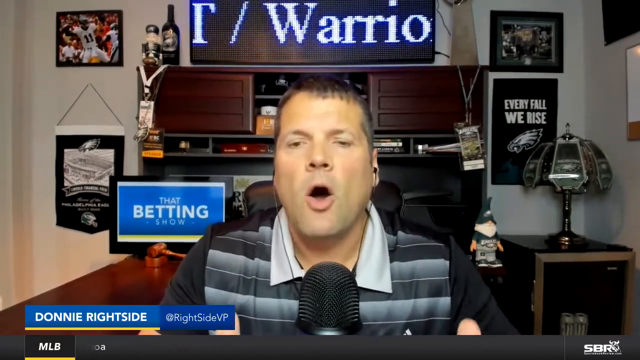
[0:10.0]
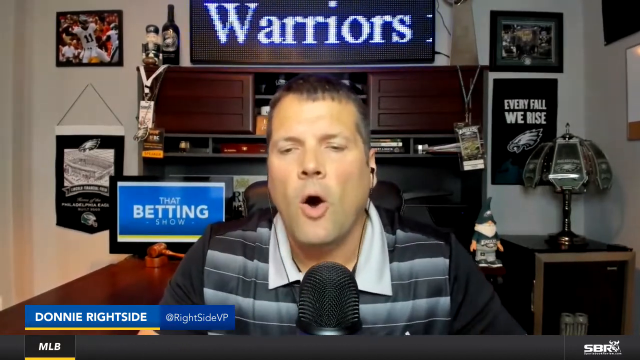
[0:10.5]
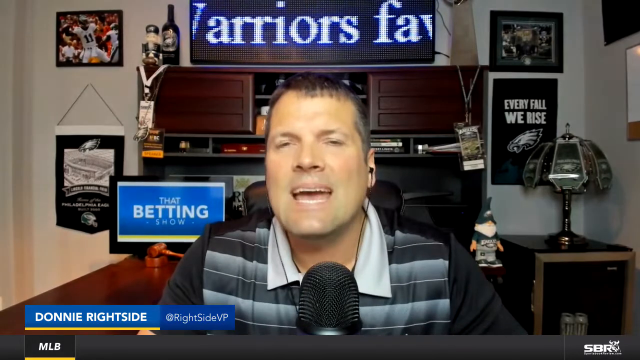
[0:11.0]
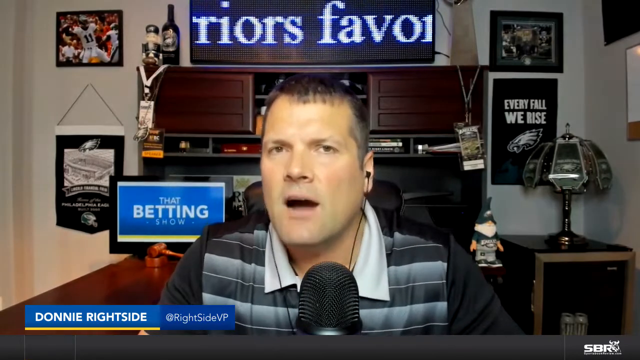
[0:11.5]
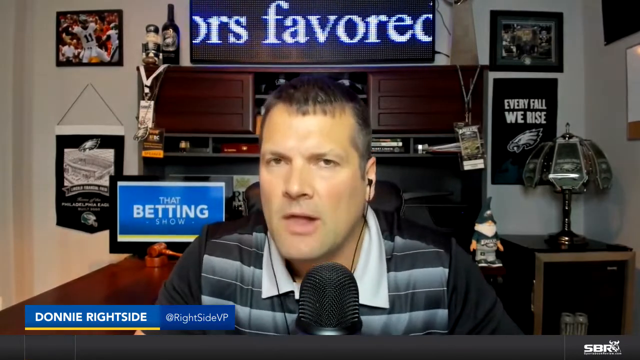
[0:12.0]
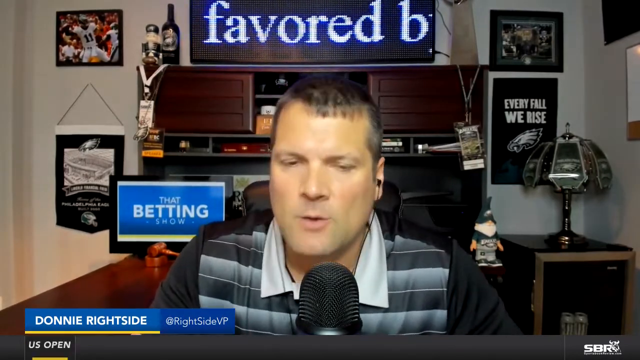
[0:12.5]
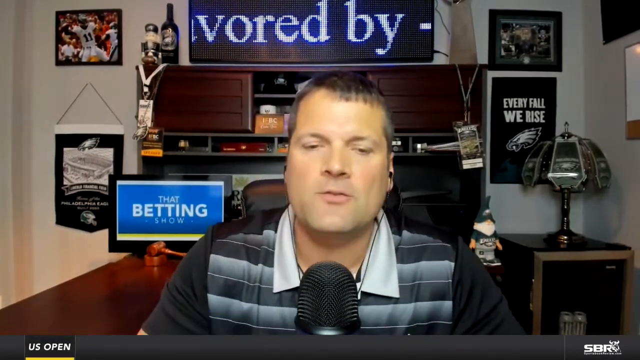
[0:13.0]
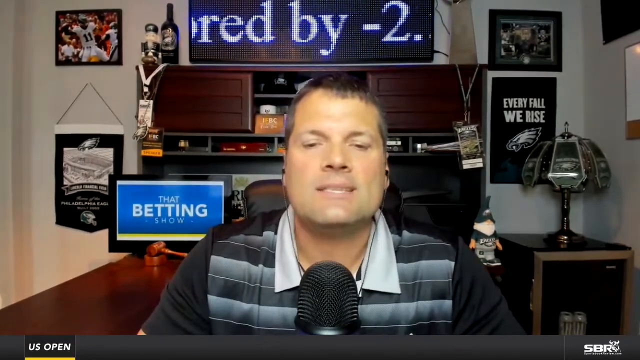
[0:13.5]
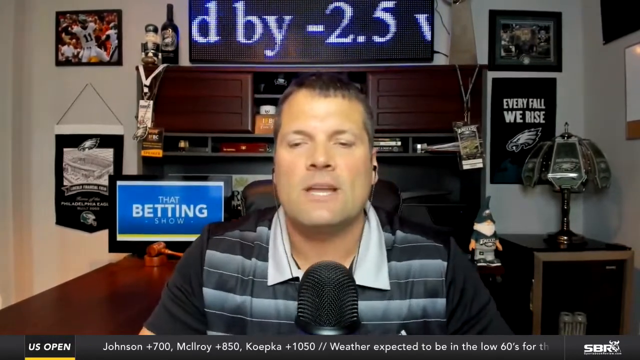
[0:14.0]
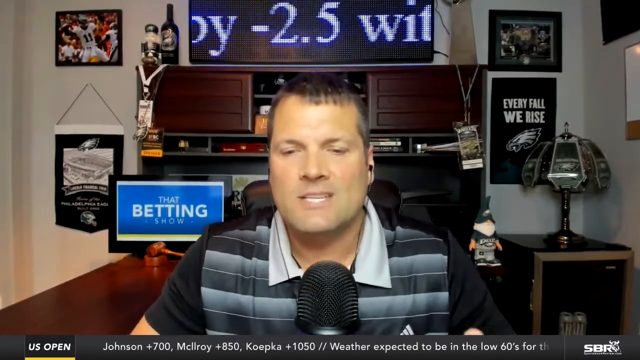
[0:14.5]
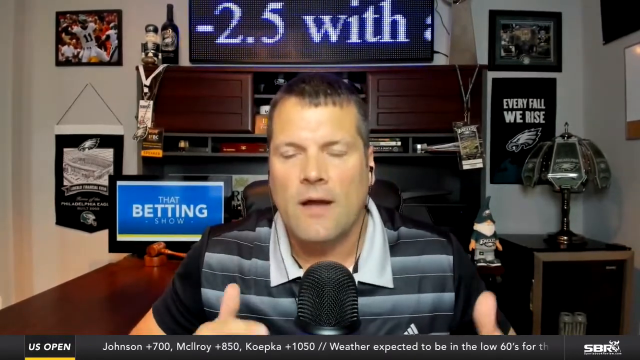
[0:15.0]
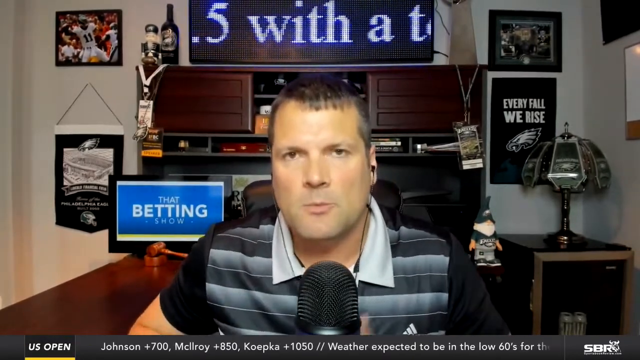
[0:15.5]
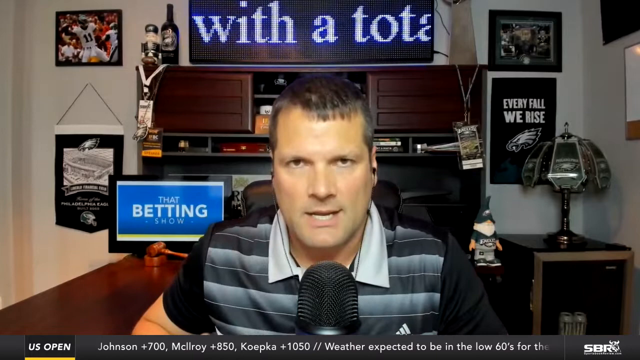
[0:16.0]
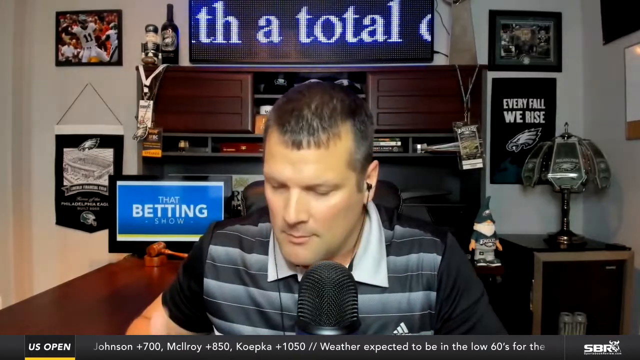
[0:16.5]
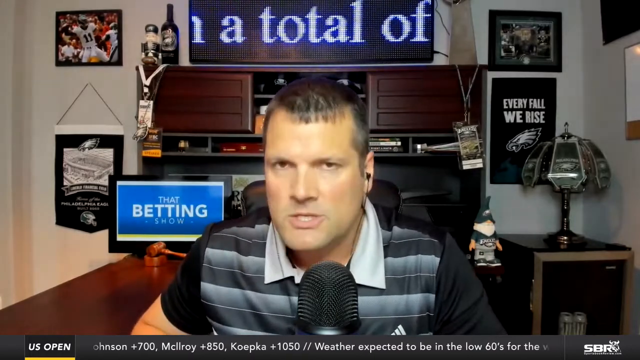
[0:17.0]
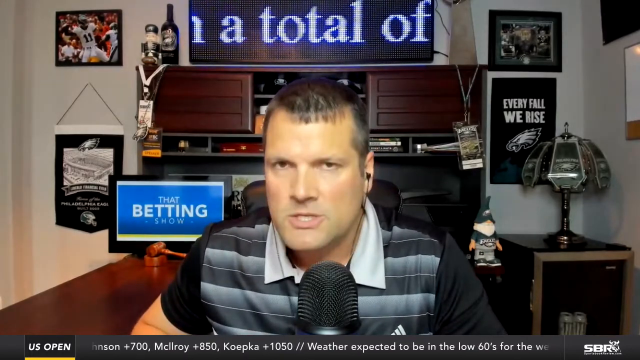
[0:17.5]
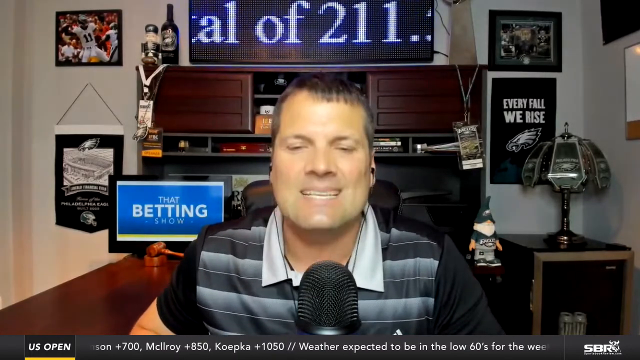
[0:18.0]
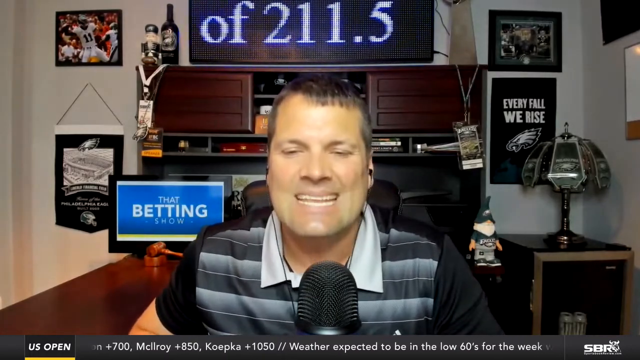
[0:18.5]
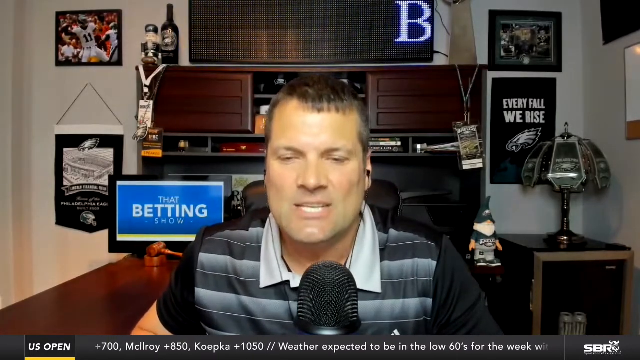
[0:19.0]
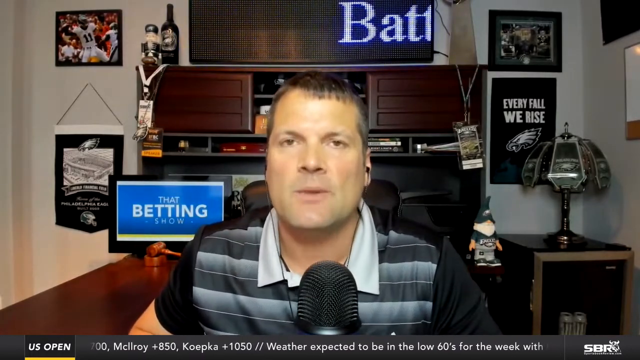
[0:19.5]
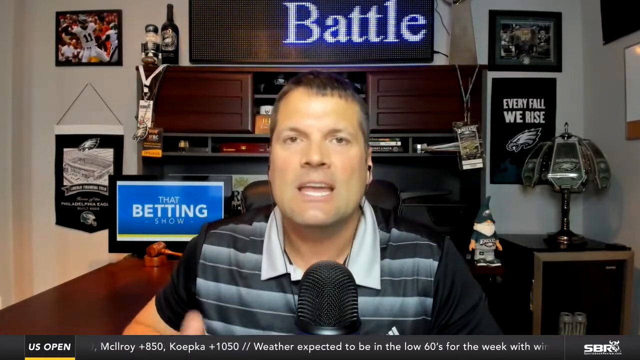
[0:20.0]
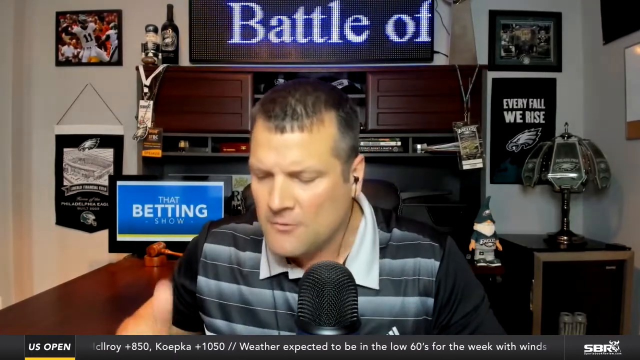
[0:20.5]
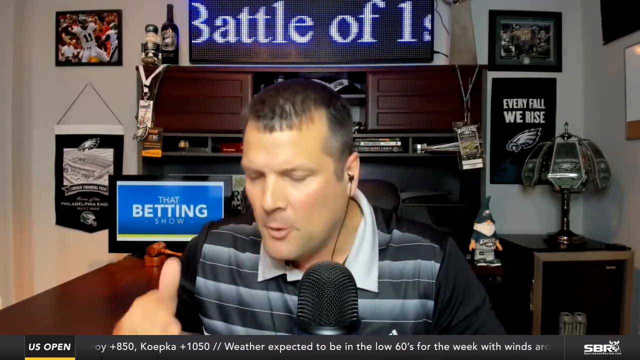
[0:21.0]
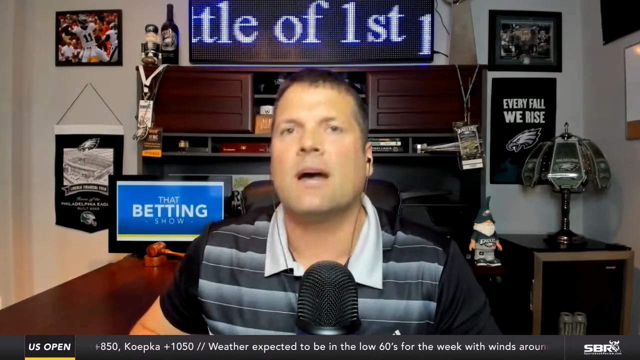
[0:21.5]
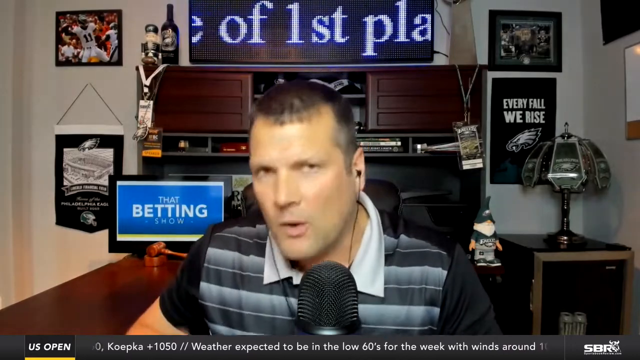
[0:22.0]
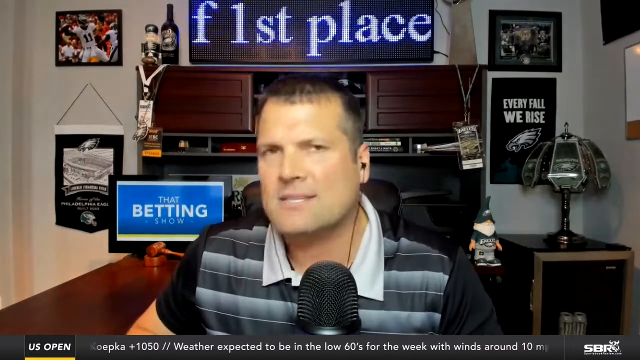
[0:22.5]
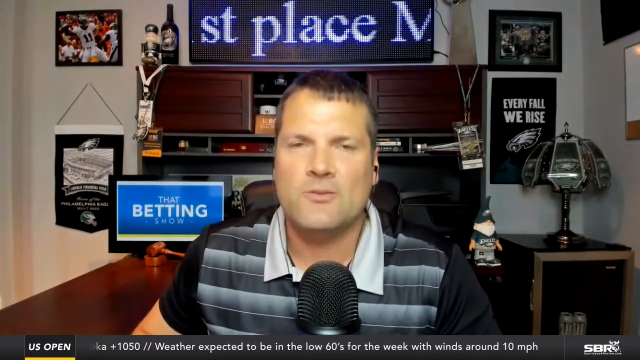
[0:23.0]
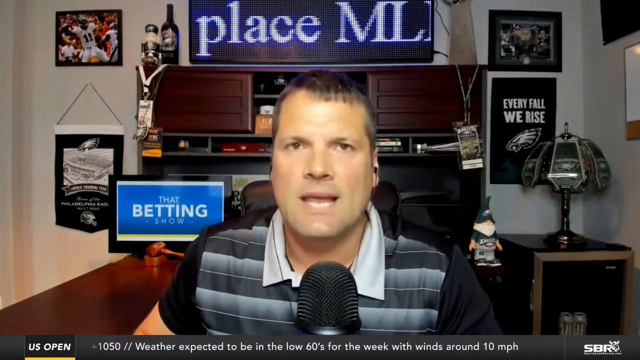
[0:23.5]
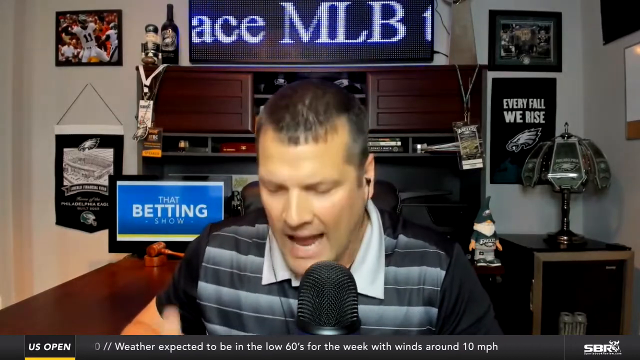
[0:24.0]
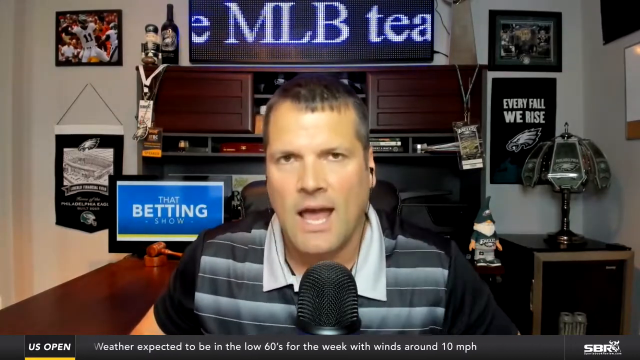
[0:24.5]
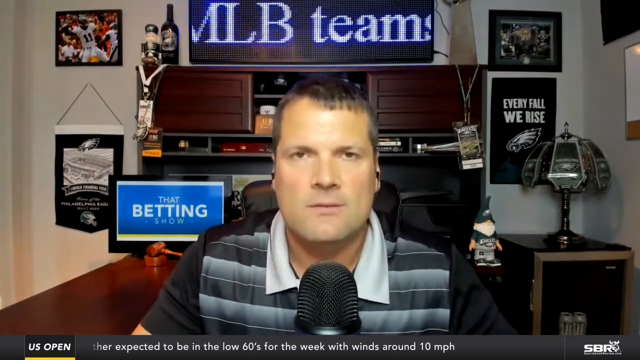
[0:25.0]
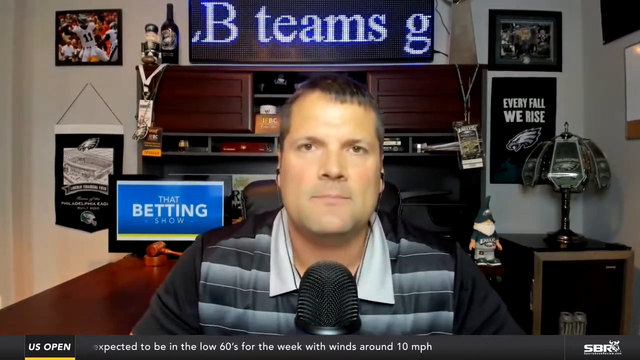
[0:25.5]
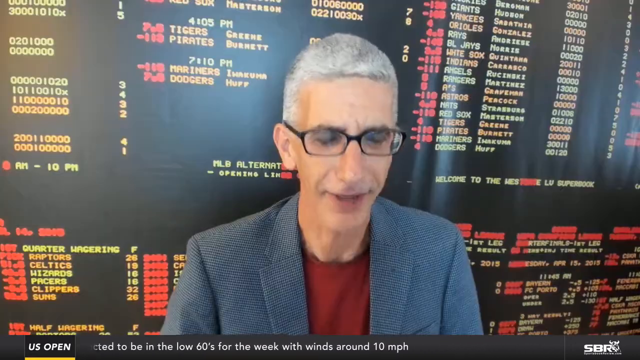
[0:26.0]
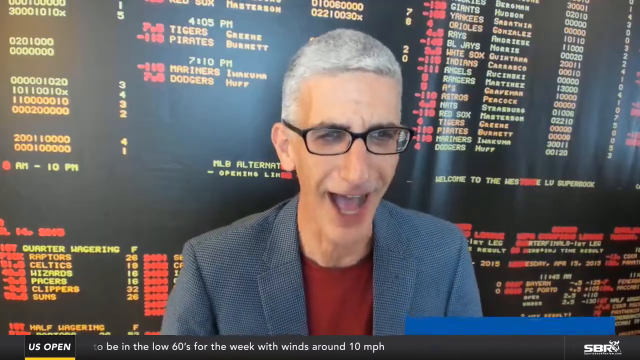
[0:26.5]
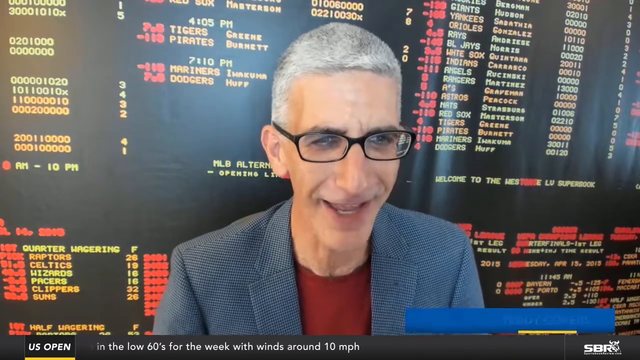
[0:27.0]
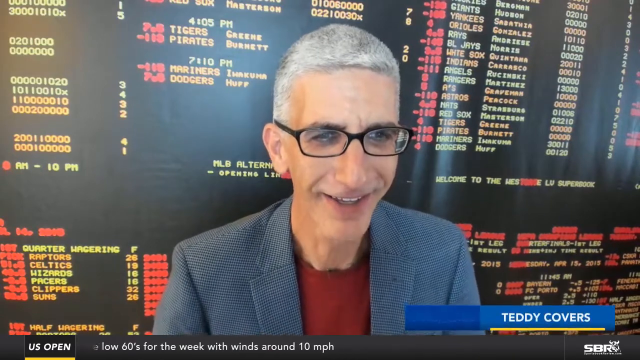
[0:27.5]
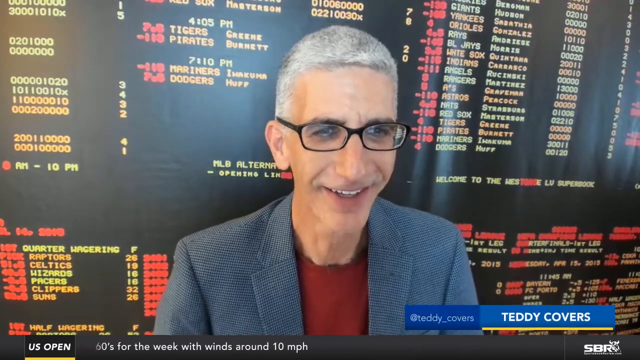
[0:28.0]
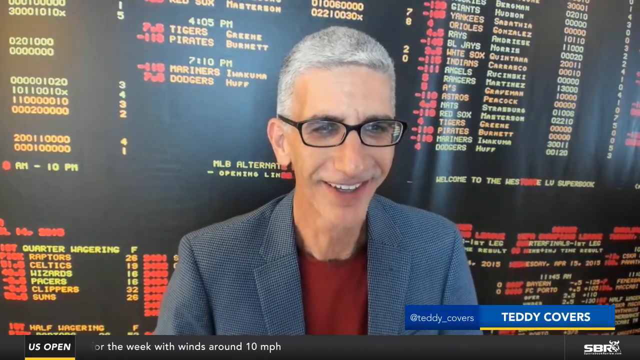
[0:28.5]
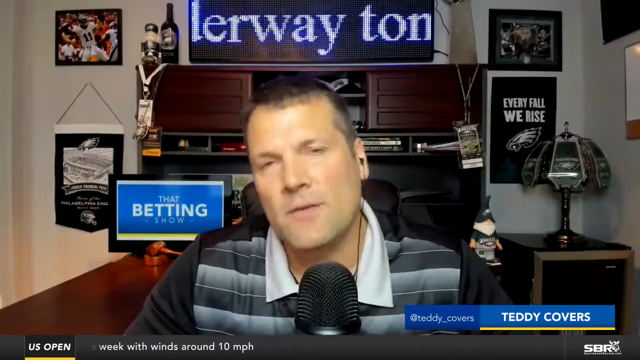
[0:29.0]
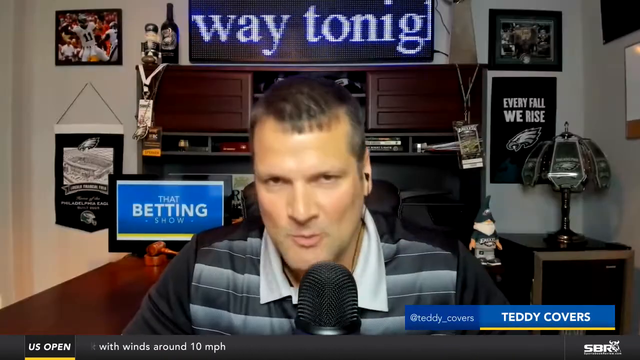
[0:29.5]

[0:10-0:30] The man keeps talking, at times leaning in, at times with his mouth open. He has a stern look, as if trying to be serious, and kind of a big jaw; he looks like kind of a big guy. His hands pop up a little at the bottom of the frame, as if he is talking with them. The words on the scoreboard behind him keep changing, constantly resetting; one message says "Battle of First Place MLB Teams". A crawl along the very bottom of the screen shows "US Open" on the left with text about the golf tournament, including golf odds: "McIlroy +850, Koepka +1050". The video then cuts to another man, possibly in conversation with the first. He looks skinny and wears a gray suit jacket, a red shirt and glasses with dark rims, and has gray hair. He stands in front of a large digital screen showing all kinds of betting odds. In the lower right, "Teddy Covers" appears in white.